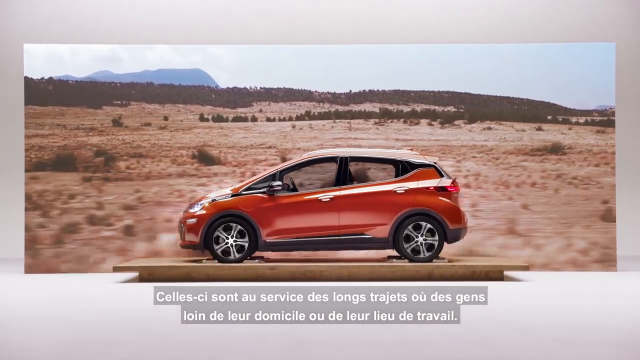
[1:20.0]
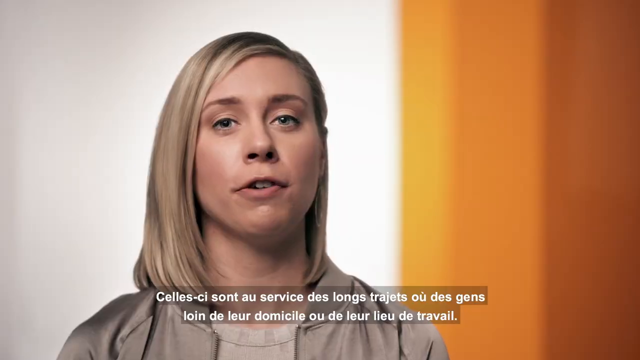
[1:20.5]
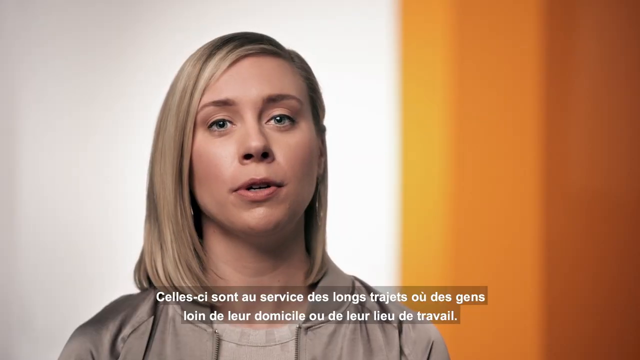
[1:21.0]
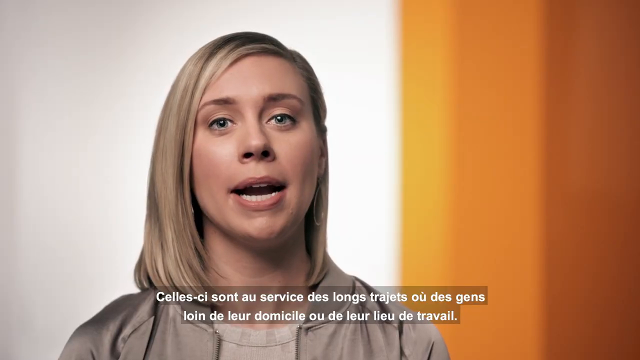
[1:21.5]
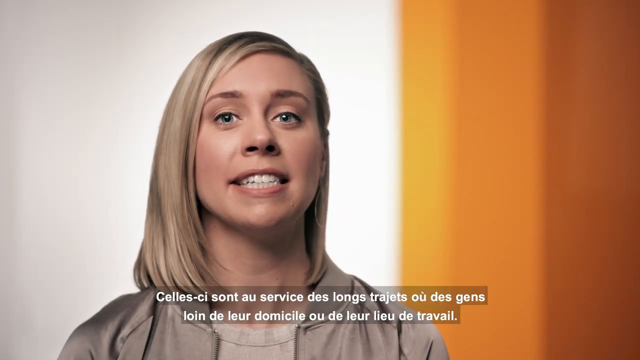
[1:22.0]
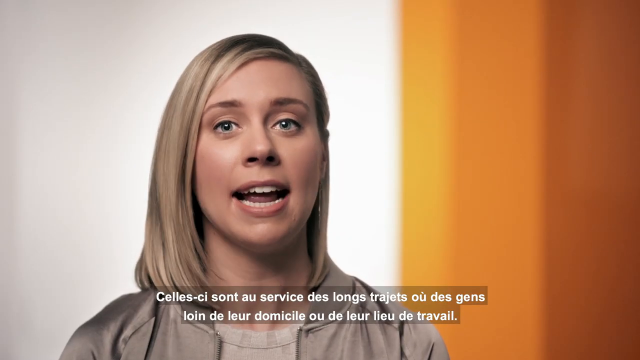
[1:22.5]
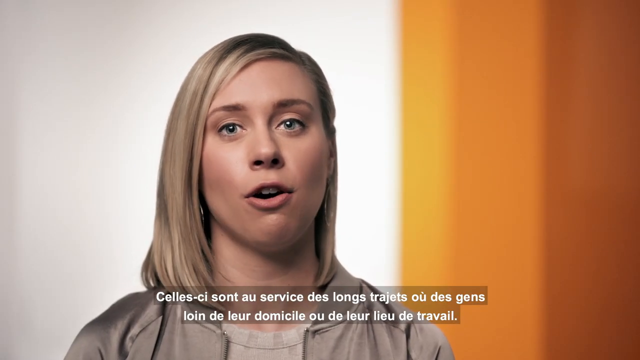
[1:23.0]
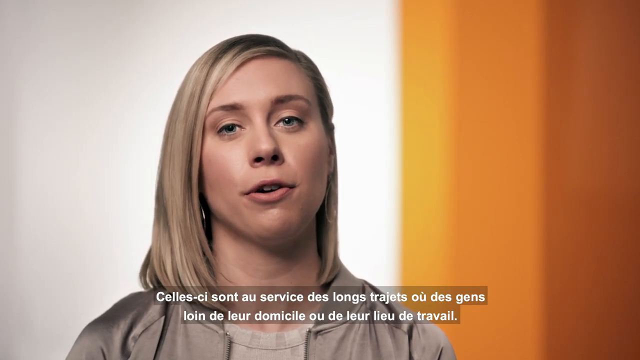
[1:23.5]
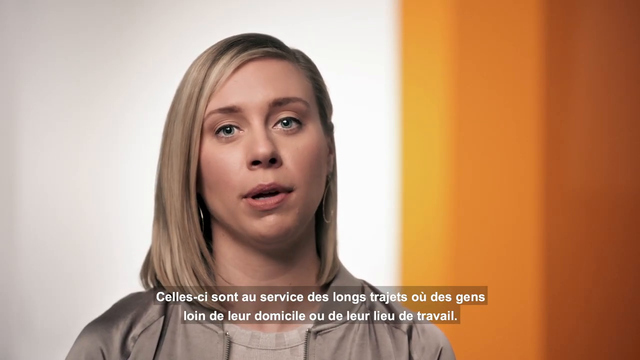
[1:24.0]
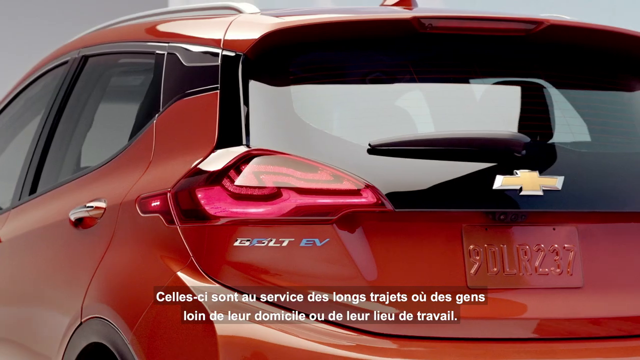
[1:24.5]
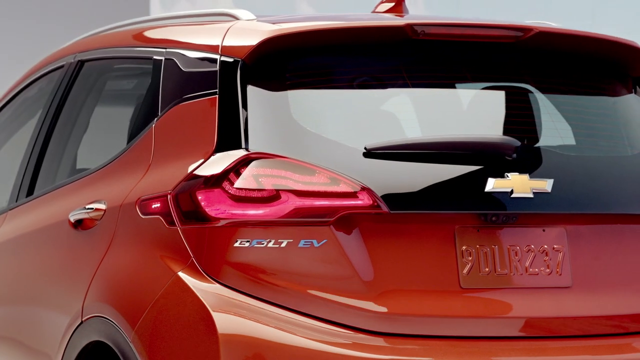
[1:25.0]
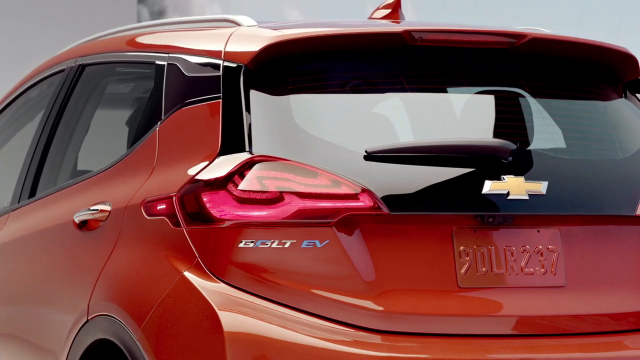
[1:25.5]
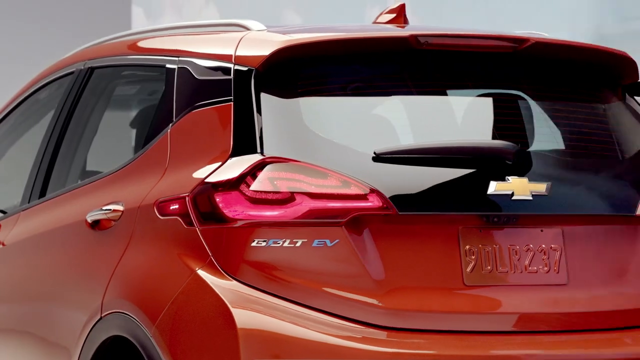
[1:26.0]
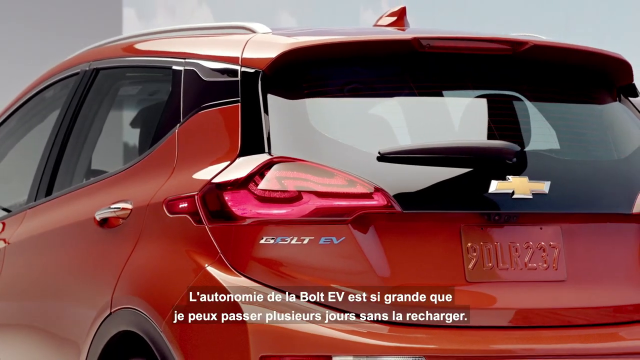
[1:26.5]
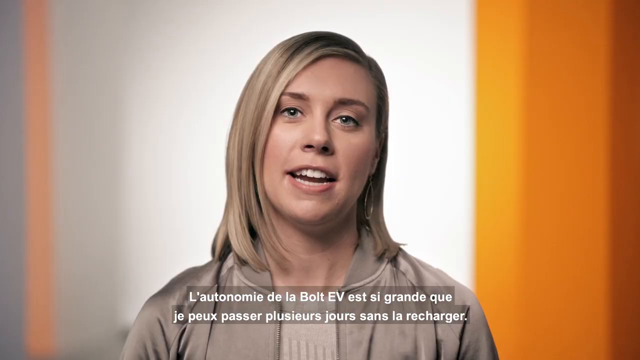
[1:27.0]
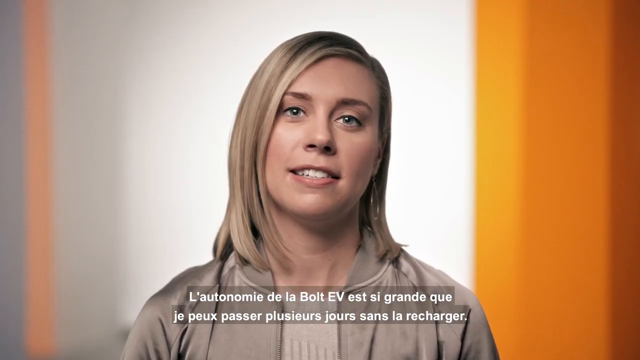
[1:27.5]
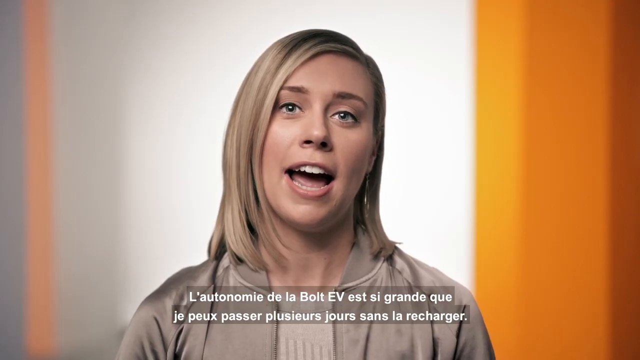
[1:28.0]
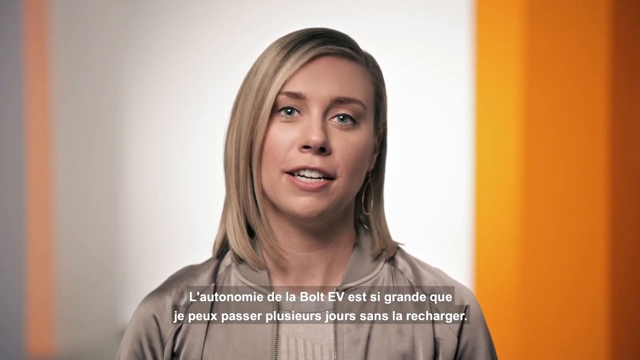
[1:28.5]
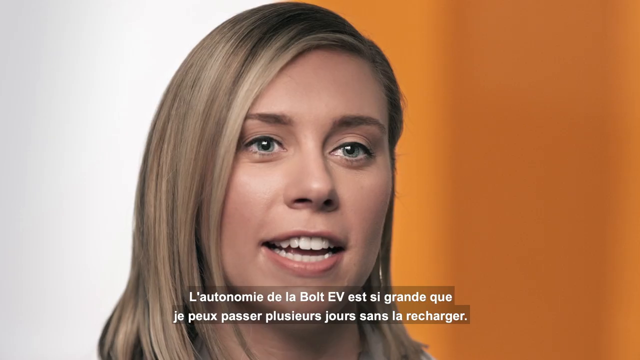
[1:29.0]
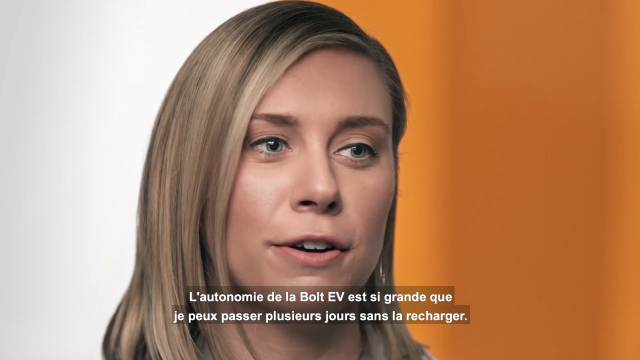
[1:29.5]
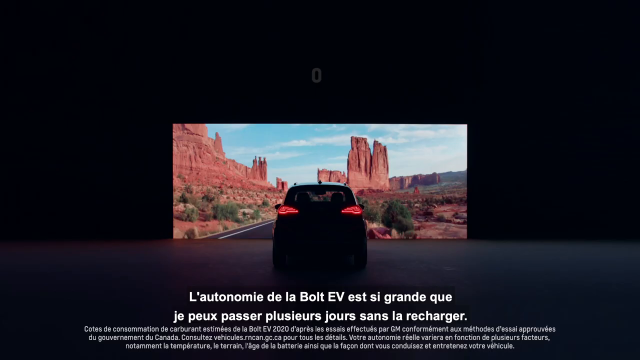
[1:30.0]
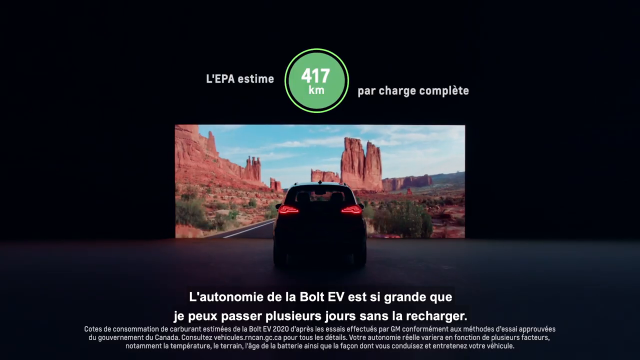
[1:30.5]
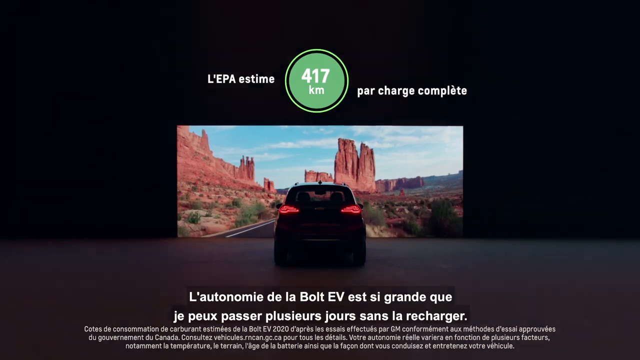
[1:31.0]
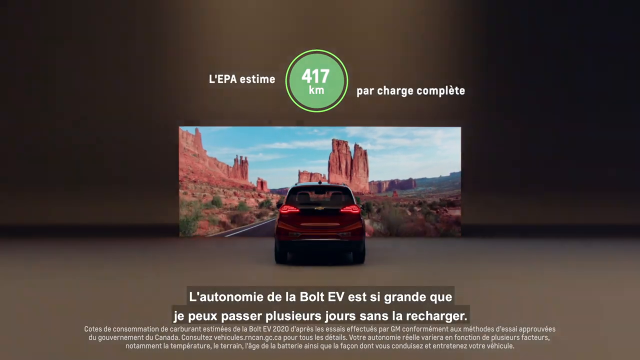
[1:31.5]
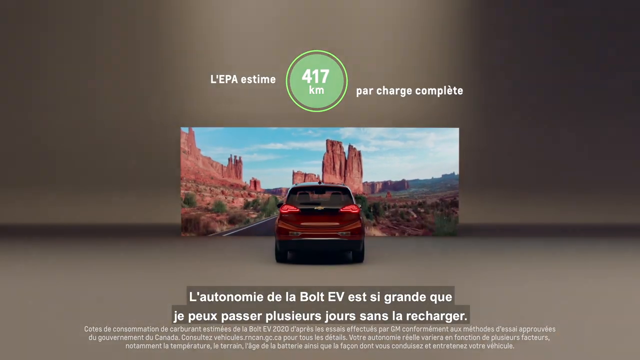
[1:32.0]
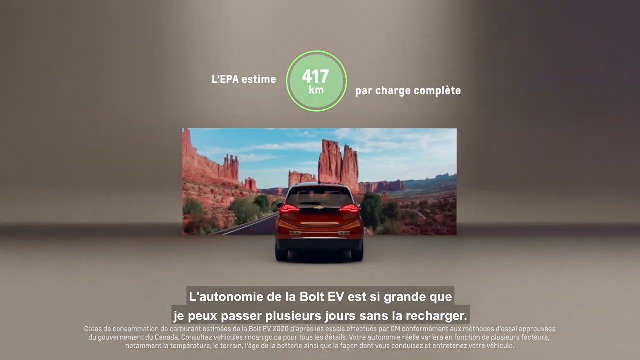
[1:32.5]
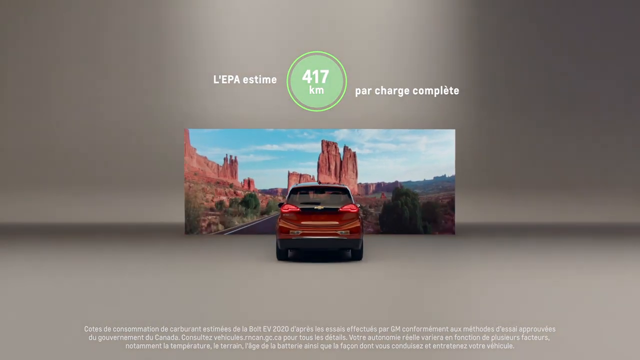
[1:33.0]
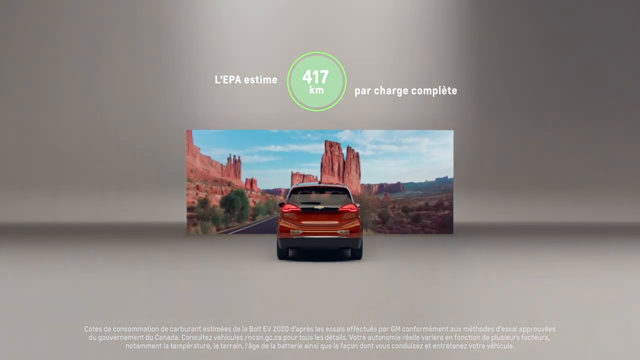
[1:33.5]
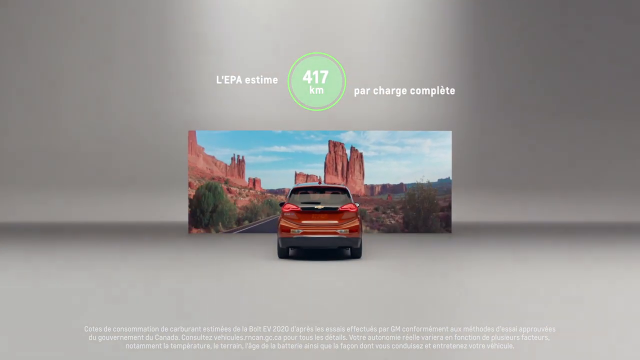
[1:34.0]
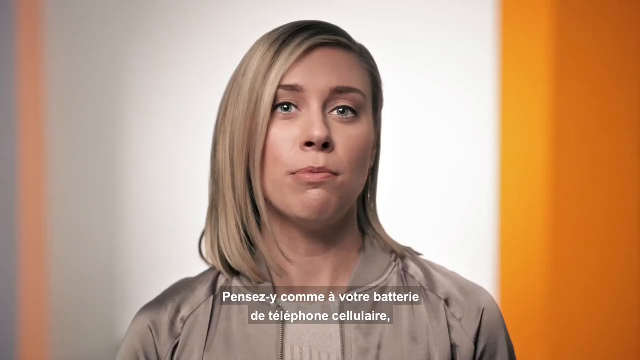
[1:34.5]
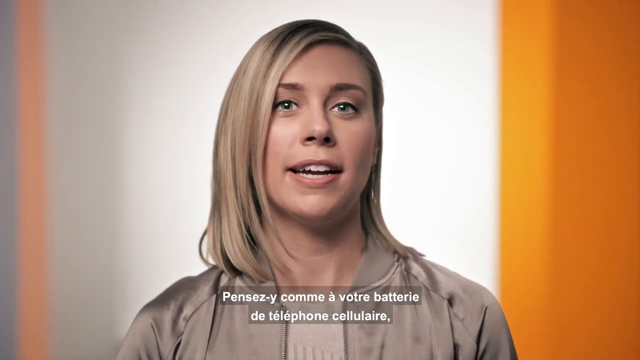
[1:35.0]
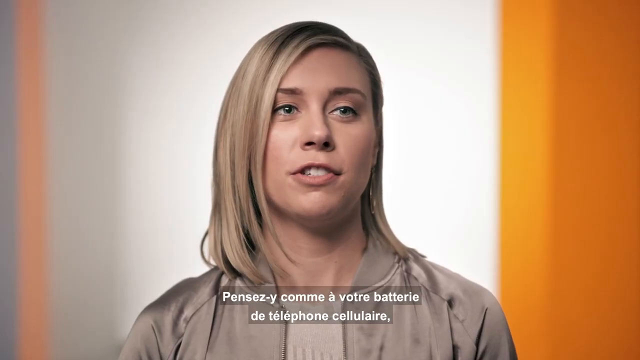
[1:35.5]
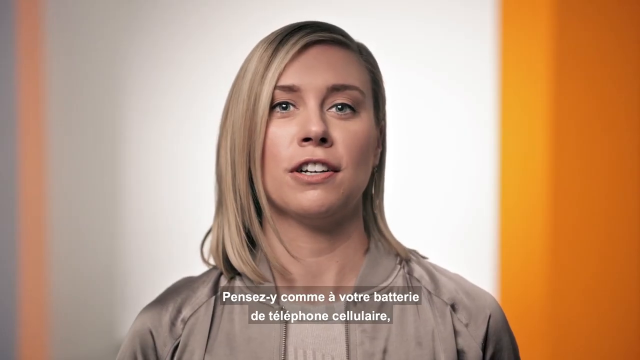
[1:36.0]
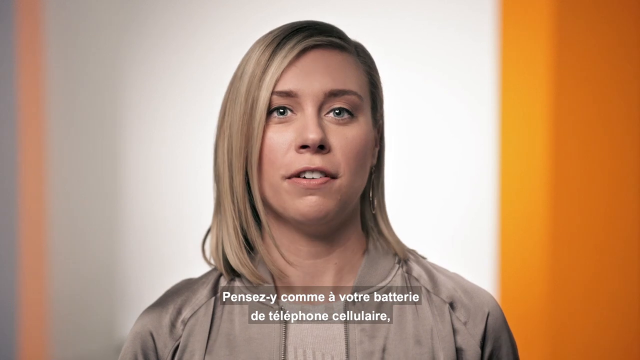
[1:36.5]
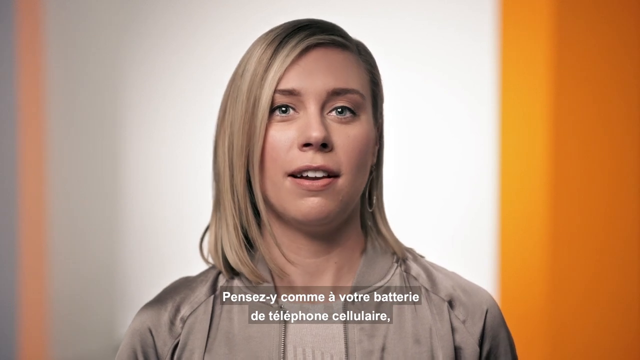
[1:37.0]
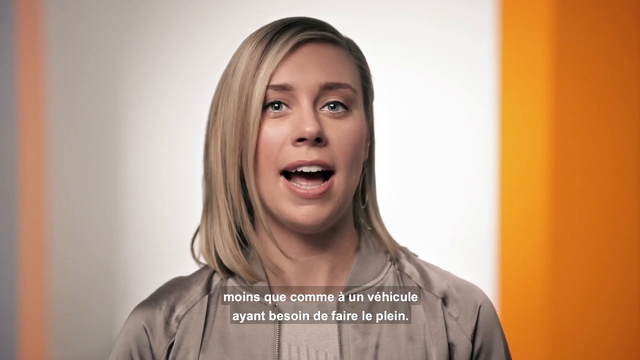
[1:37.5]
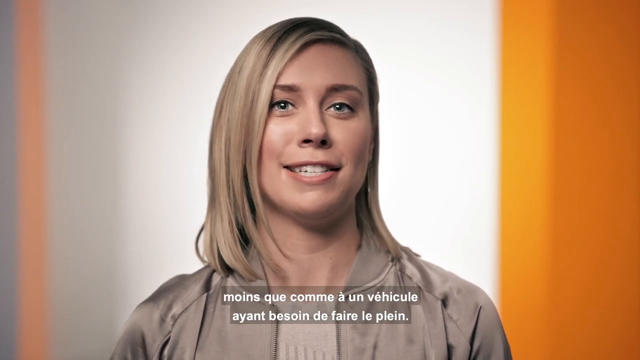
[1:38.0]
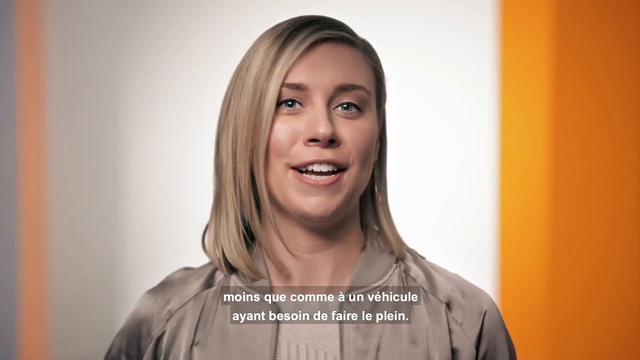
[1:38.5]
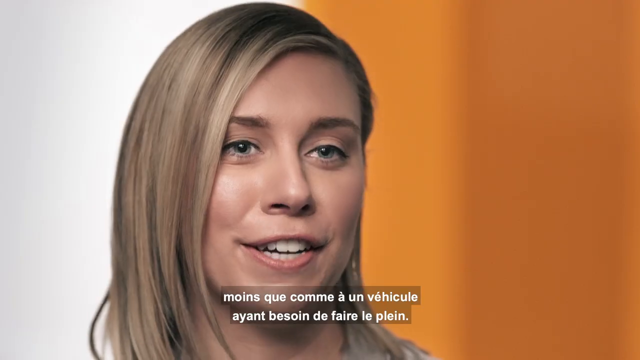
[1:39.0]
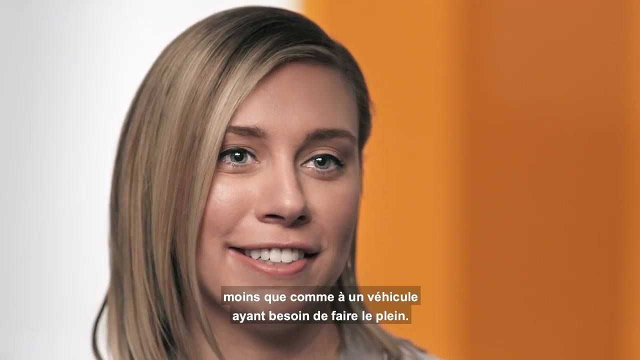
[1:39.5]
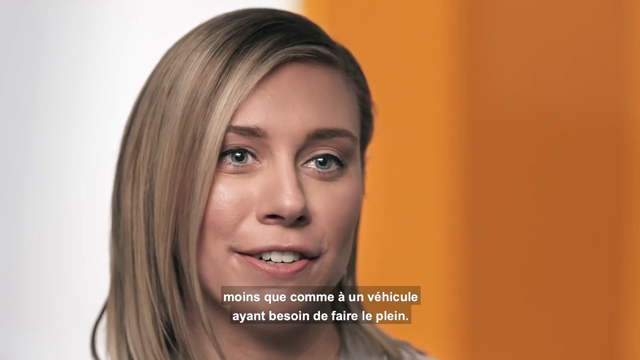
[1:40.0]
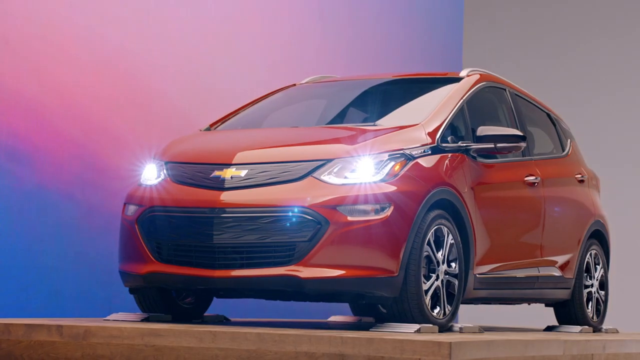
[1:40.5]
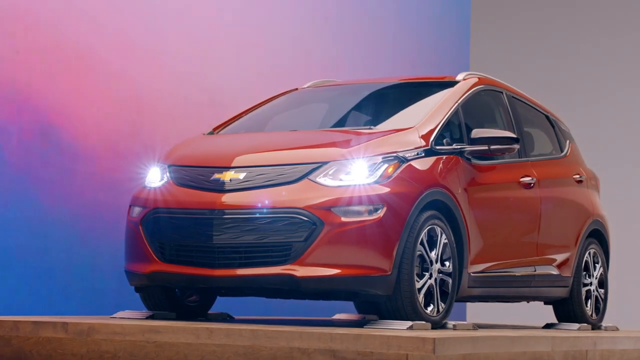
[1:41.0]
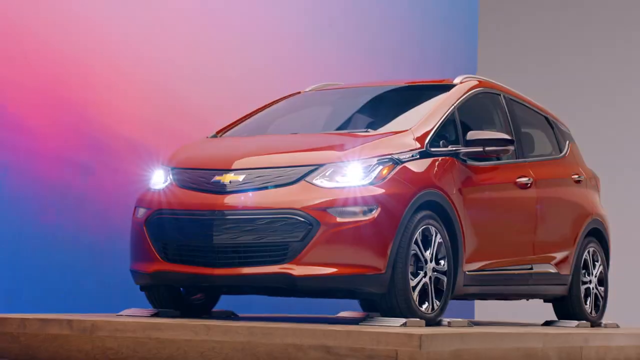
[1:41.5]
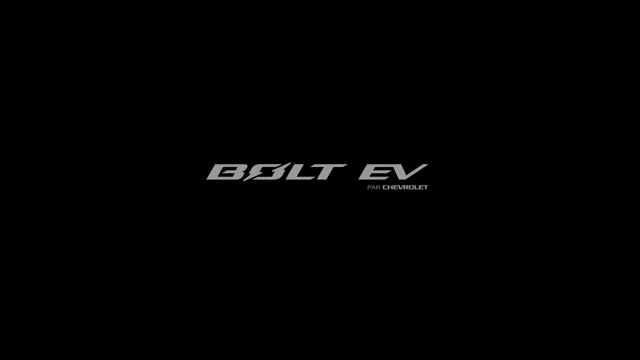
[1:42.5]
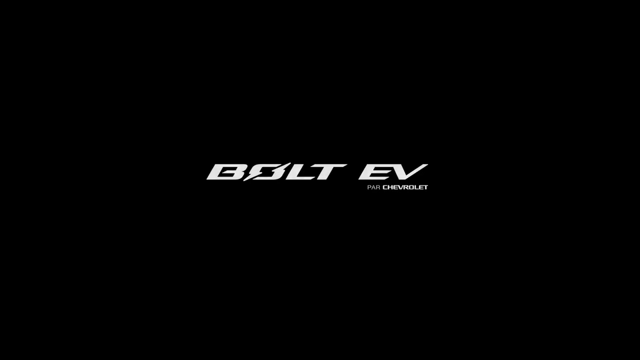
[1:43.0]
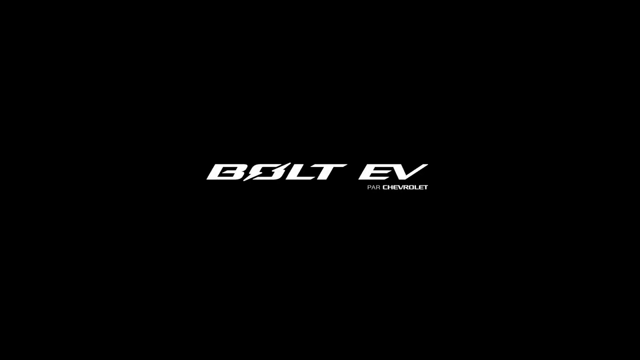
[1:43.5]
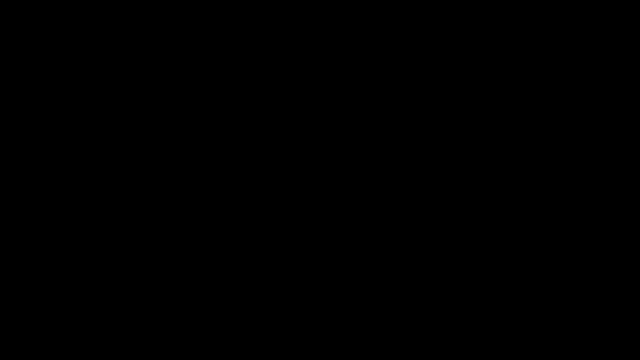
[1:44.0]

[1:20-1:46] A Bolt electric vehicle is on a stand with rollers, its wheels spinning. What looks like a desert scene in the background is really a monitor showing a video. A blonde woman appears, talking to the camera, with curtains behind her on the right and a wall on the left. The back of the Bolt EV is shown with its license plate reading "9DLR237", a red plate, and the Chevrolet logo on the back window identifies it as a Chevrolet vehicle. The woman returns, continuing to talk; she has light green or gray eyes. The Bolt is shown again with a demonstration that it can go 417 kilometers per charge, an EPA estimate. The woman comes back, talking to the camera and smiling. Finally the front of the vehicle is shown, with the logo on the hood, on the grille.